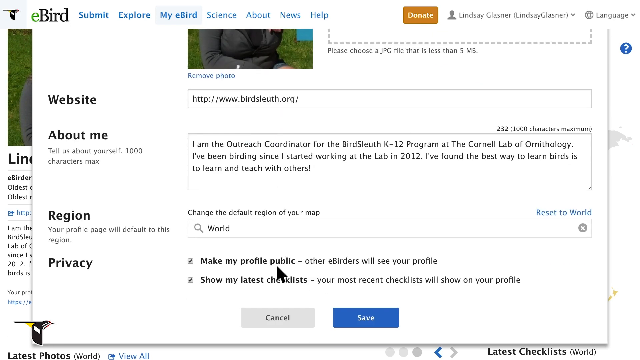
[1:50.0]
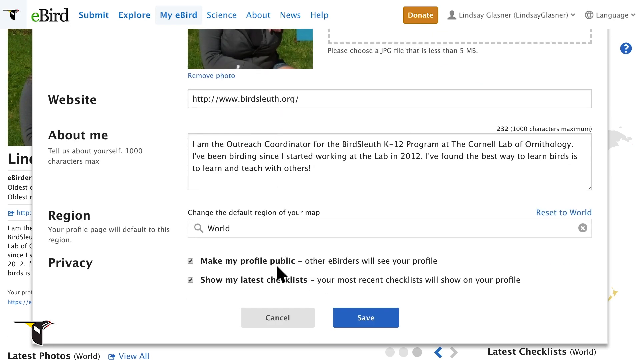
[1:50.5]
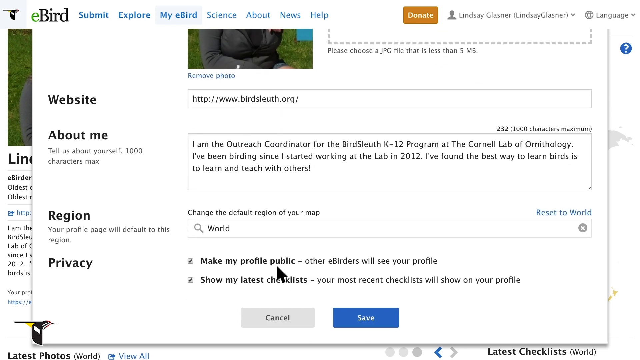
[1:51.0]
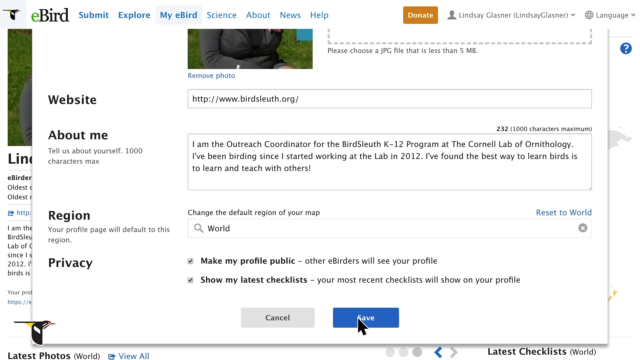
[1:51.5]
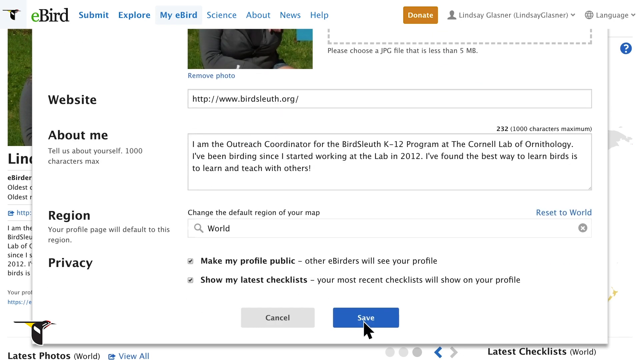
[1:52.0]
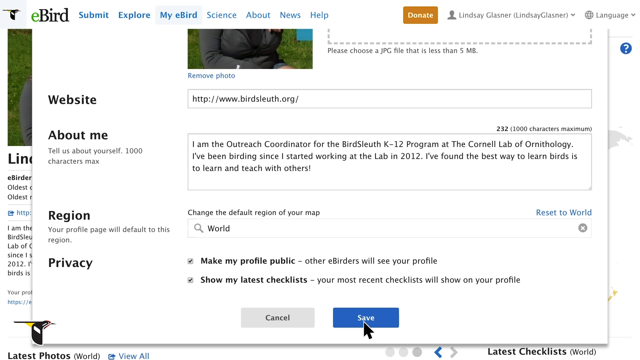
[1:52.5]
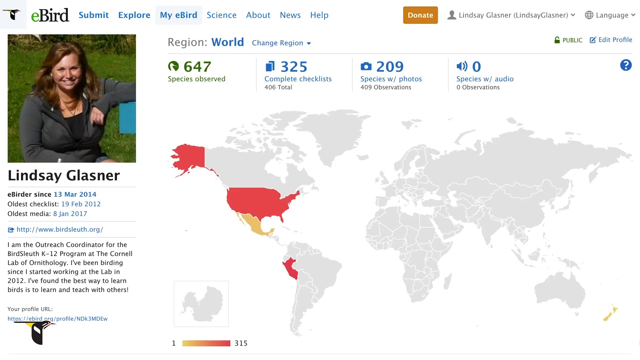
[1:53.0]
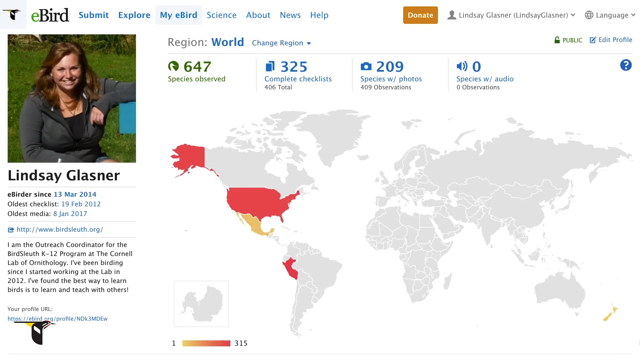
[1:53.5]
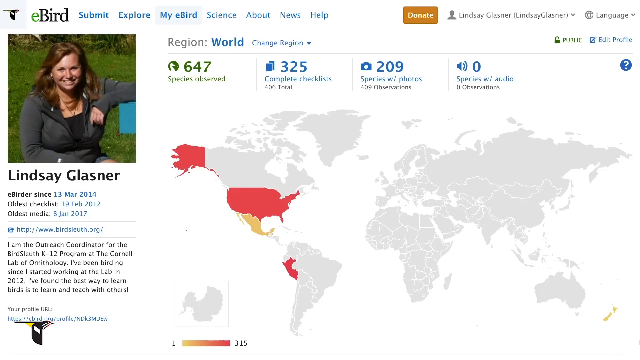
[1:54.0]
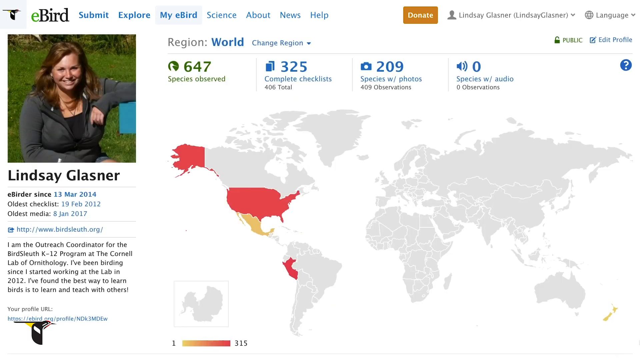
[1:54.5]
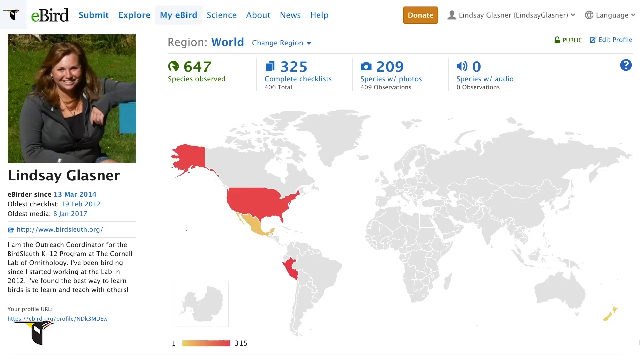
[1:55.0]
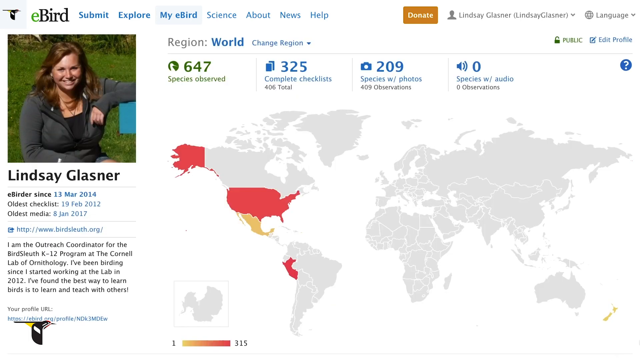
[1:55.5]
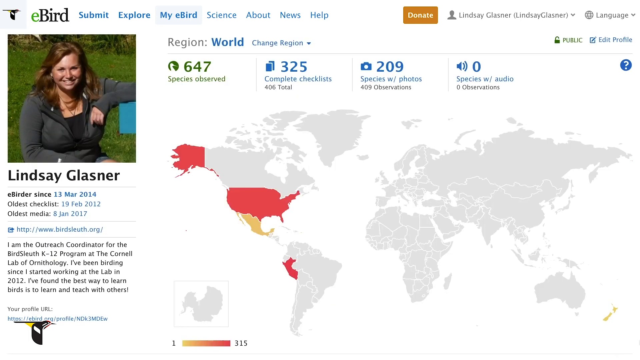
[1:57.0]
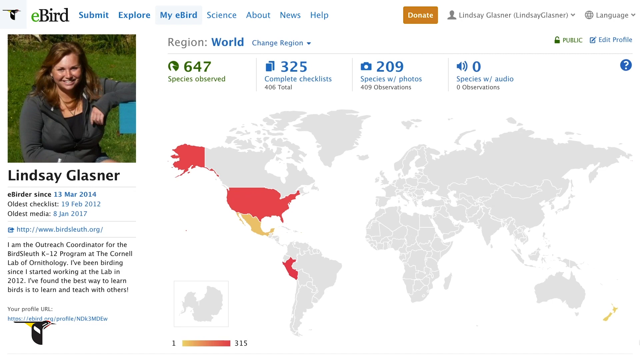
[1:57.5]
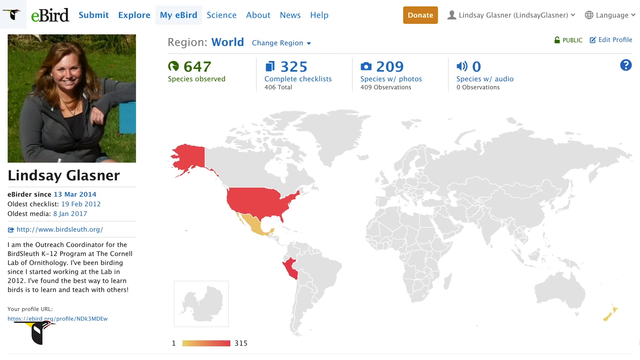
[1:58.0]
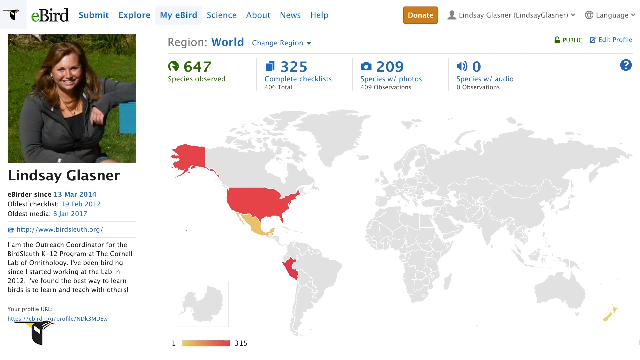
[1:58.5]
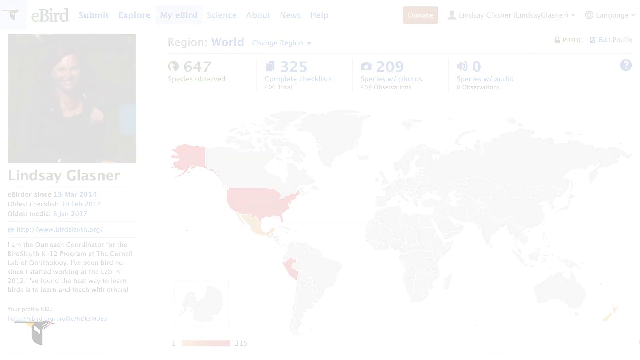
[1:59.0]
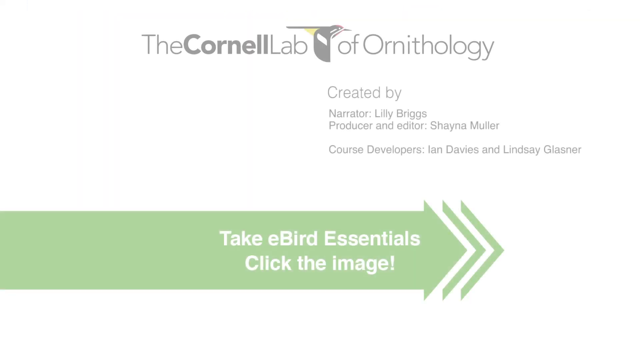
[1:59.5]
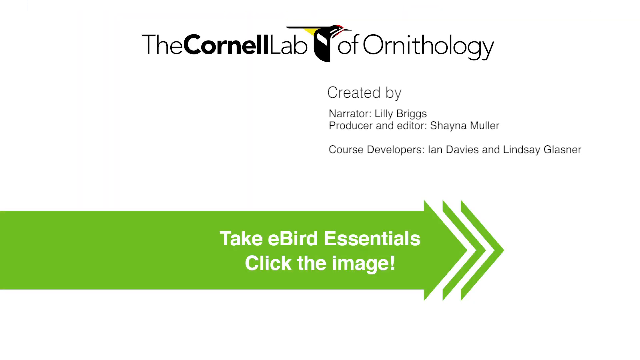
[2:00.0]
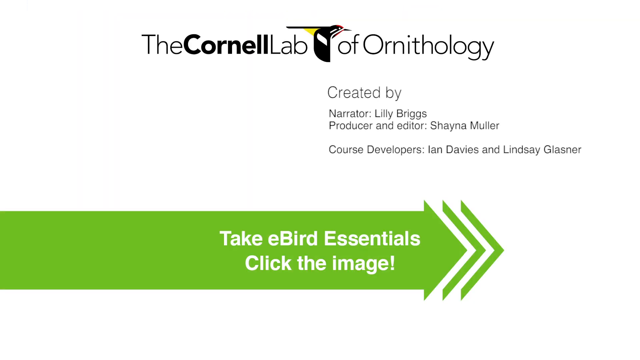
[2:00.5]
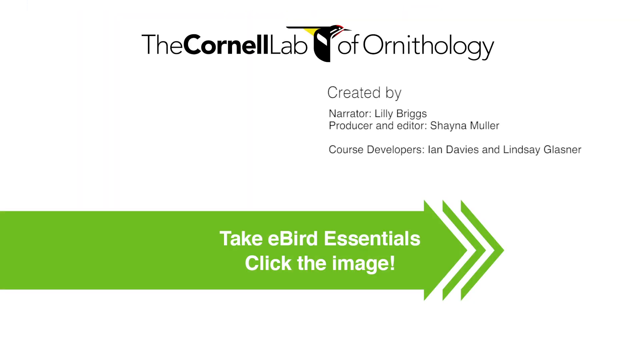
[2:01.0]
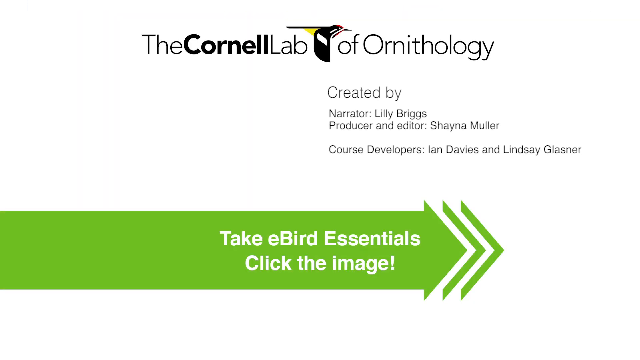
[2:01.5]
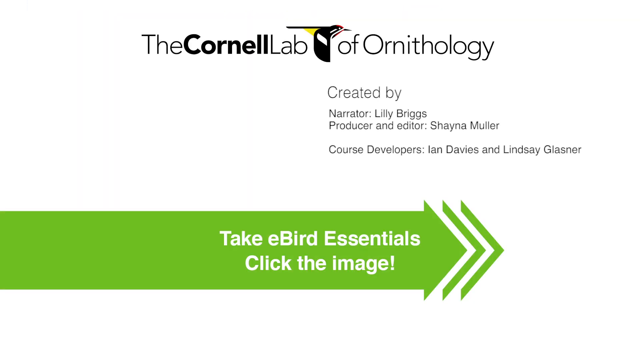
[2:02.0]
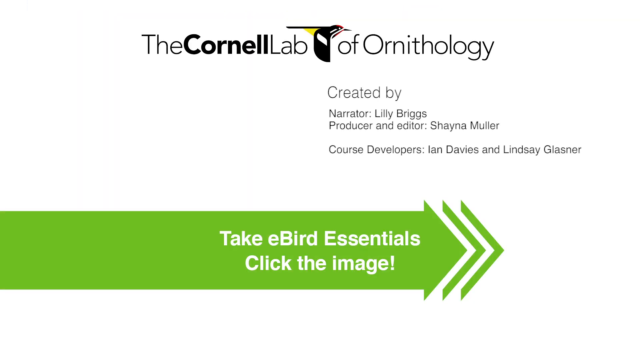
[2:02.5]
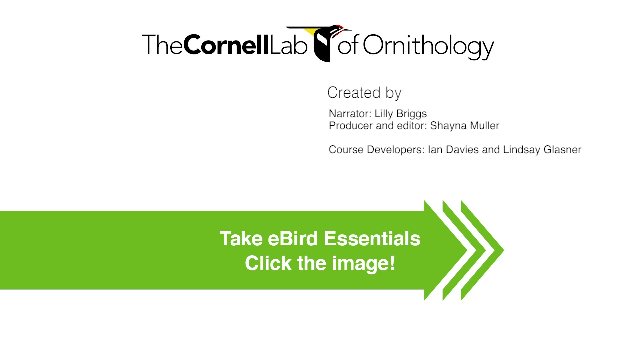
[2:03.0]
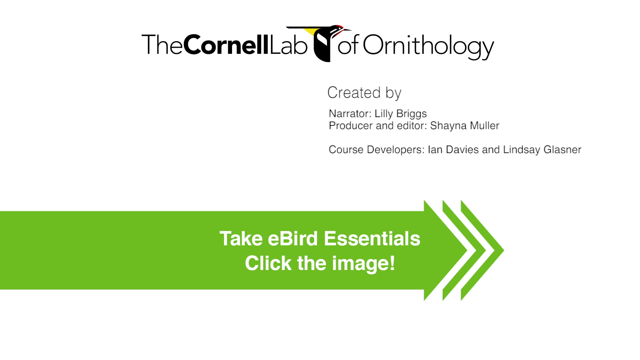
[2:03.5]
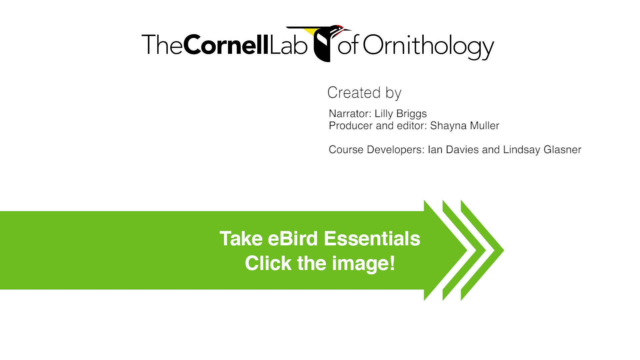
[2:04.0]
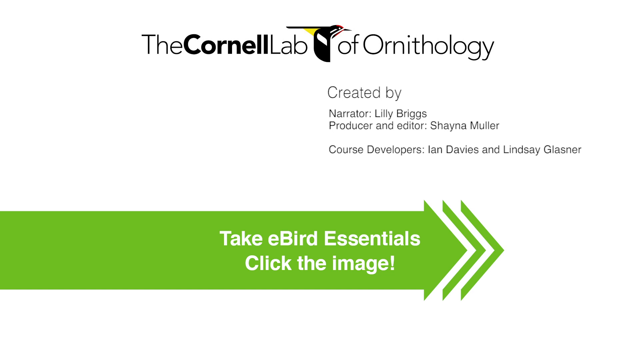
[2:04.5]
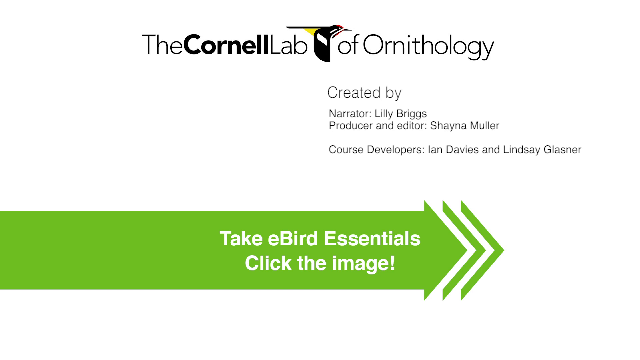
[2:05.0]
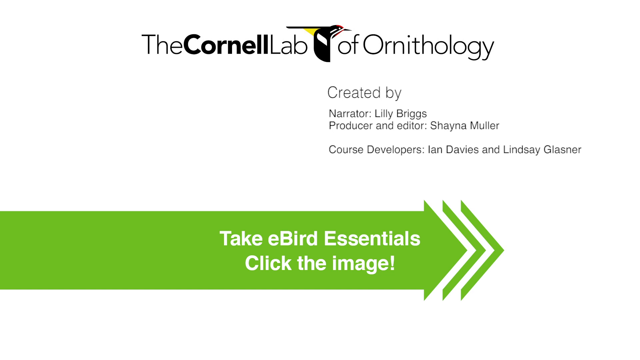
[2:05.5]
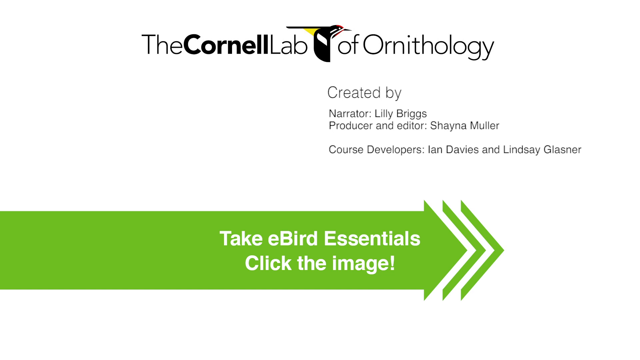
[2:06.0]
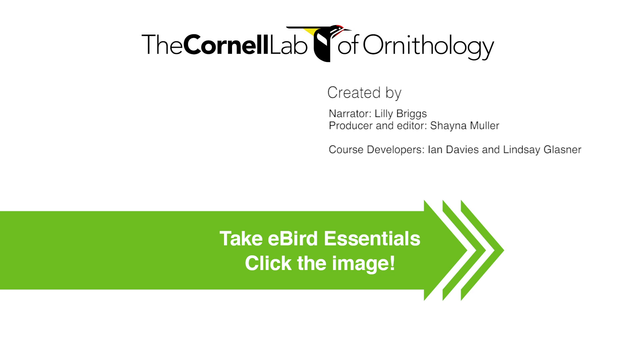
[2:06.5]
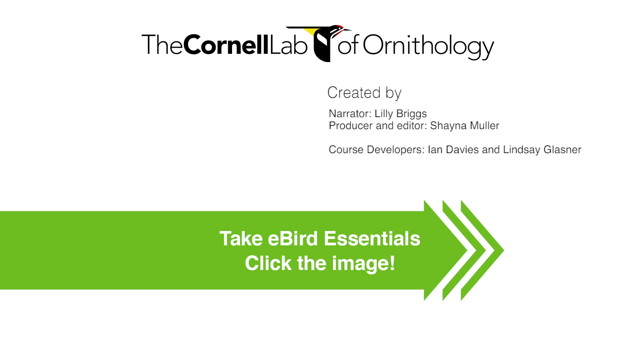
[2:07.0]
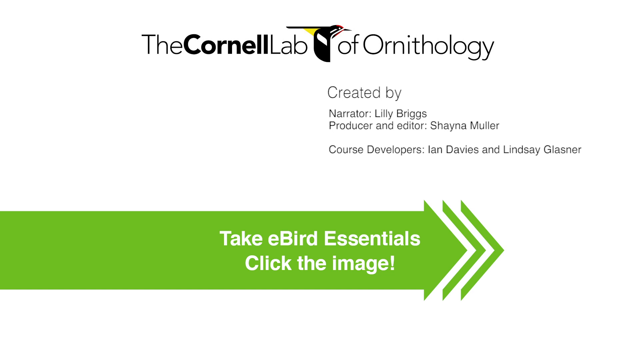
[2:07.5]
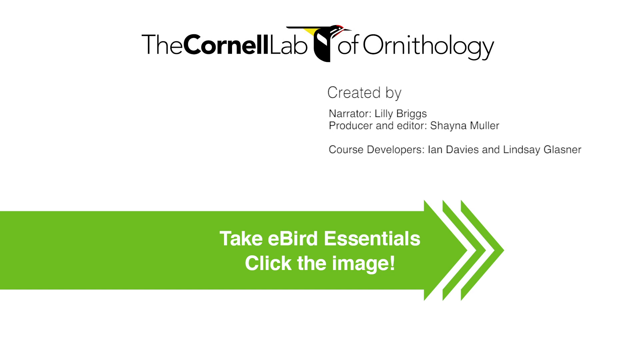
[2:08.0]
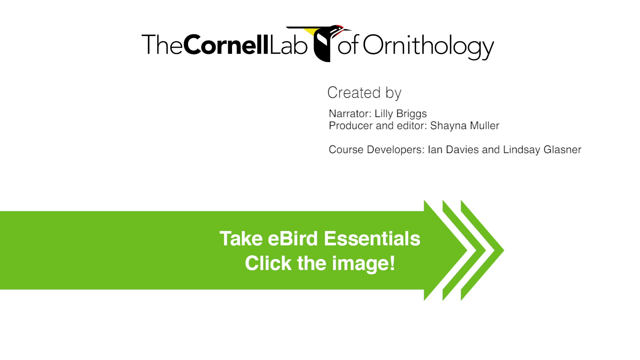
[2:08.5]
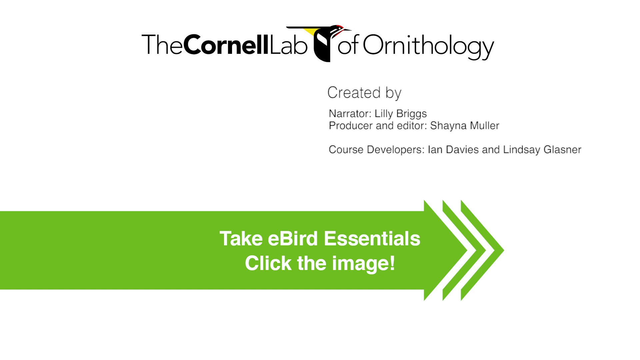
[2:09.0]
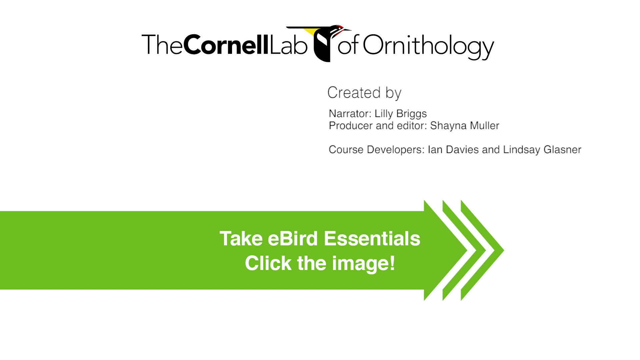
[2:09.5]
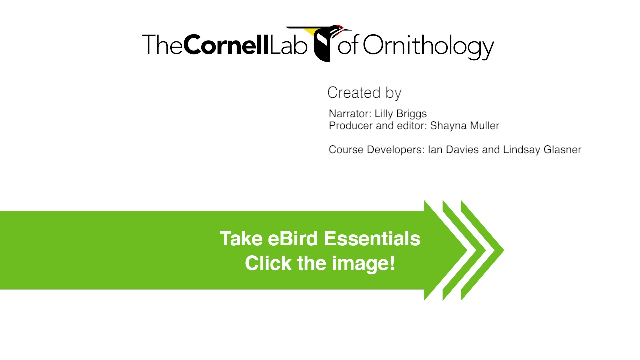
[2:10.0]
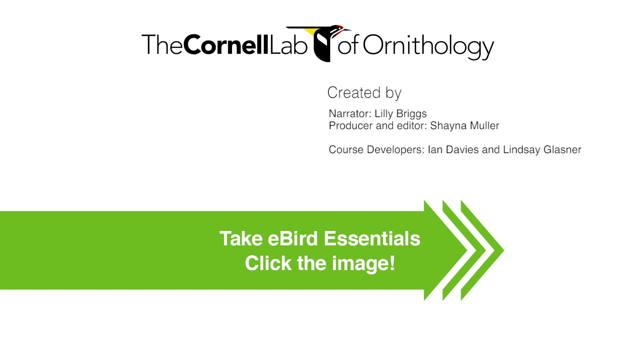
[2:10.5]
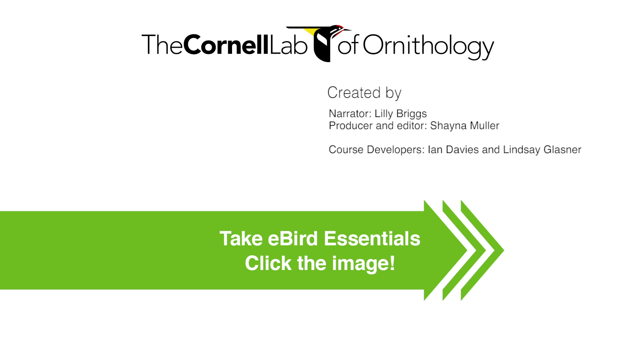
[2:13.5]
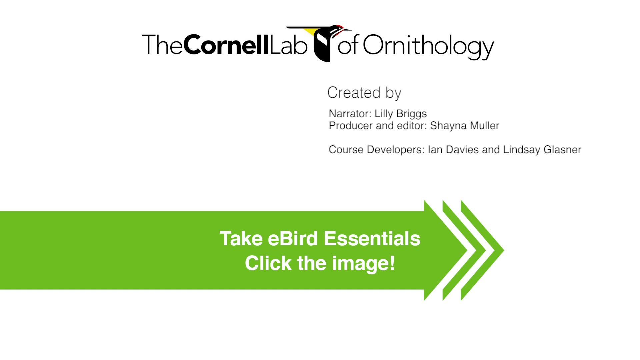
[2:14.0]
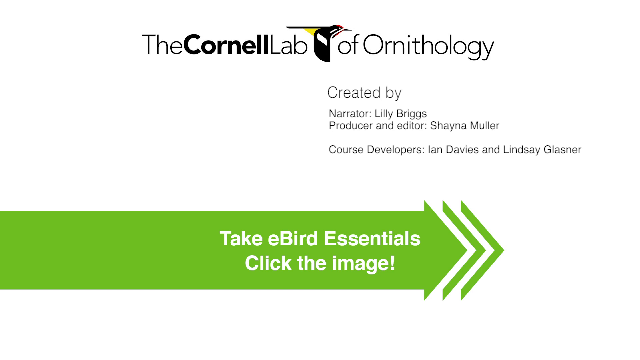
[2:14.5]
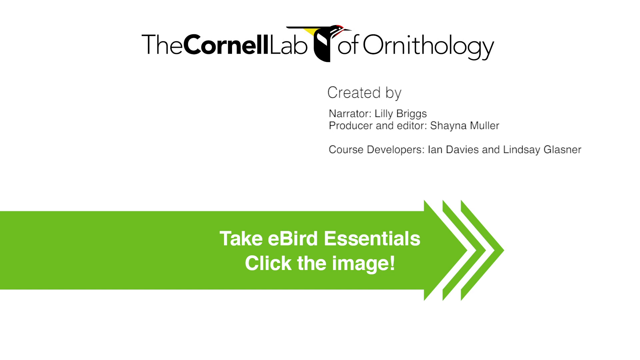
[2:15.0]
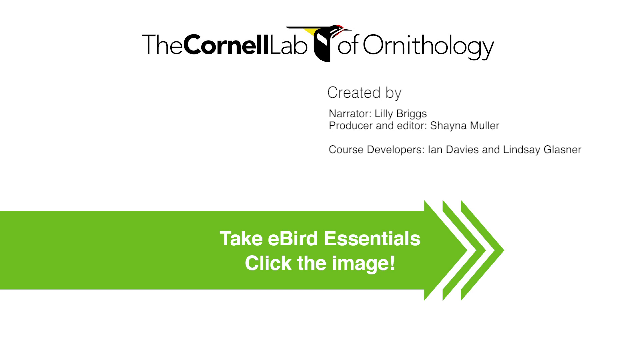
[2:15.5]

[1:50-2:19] The cursor goes down and clicks the blue save button, returning to the main part of her profile, with the picture on the left, her name and information underneath it, and the map to the right. The video then fades to a white background. Across the top it reads "the Cornell Lab of Ornithology," with a drawing of a blackbird going to the right between "lab" and "of." Below the bird, in smaller black lettering, it reads "created by," then "narrator, Lily Briggs," then "producer and editor, Shauna Mueller," then "course developers, Ian Davies and Lindsay Glasner." Below that, a big green arrow extends more than halfway across, and before its point, in white, it reads "take eBird Essentials, click the image." Outside the tip of the arrow are two small light green outlines of the tip.